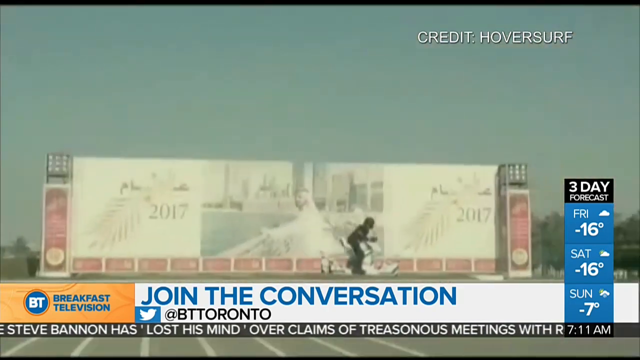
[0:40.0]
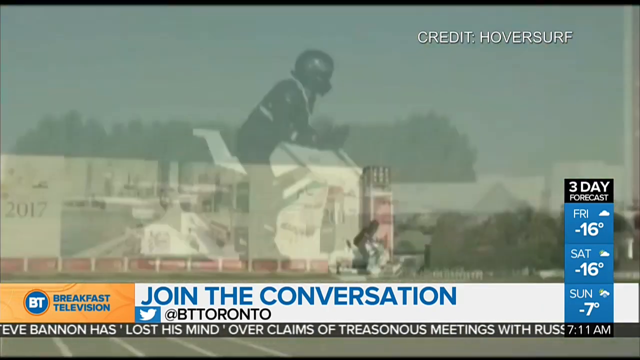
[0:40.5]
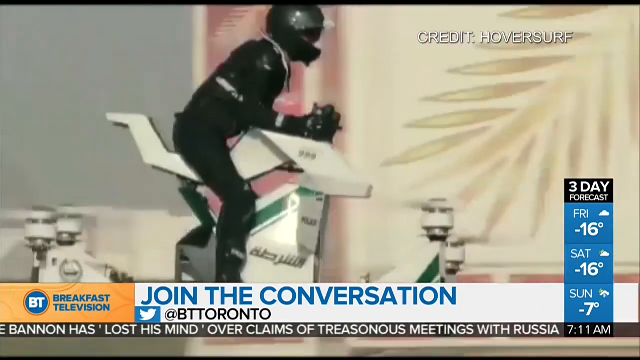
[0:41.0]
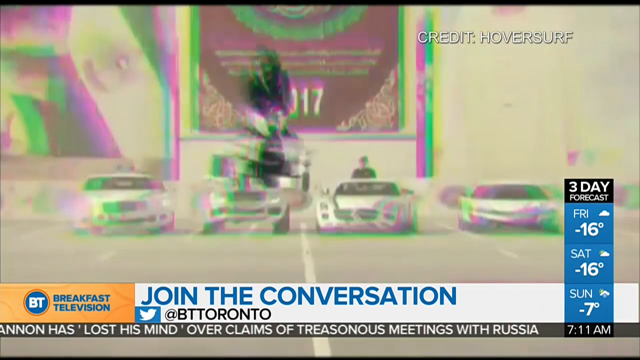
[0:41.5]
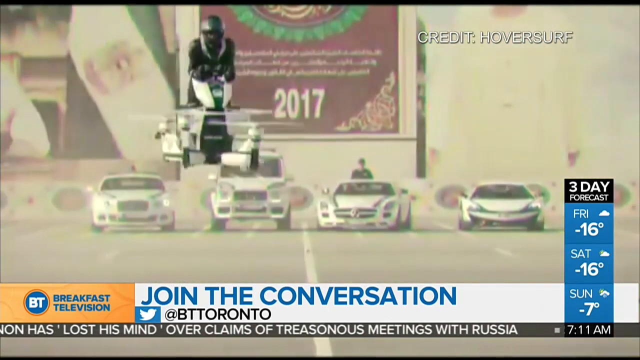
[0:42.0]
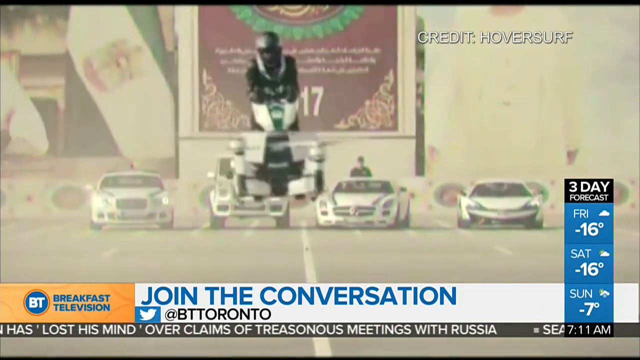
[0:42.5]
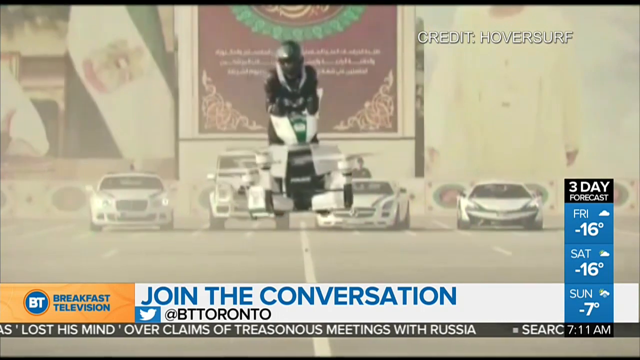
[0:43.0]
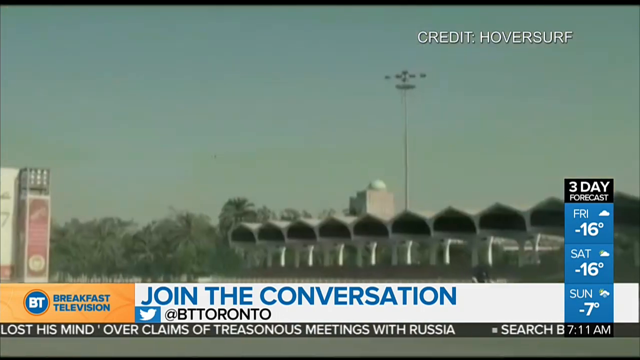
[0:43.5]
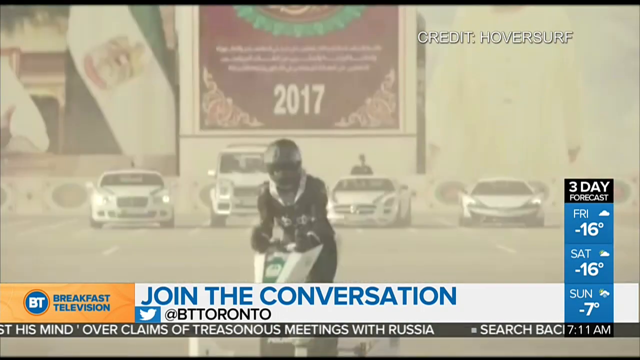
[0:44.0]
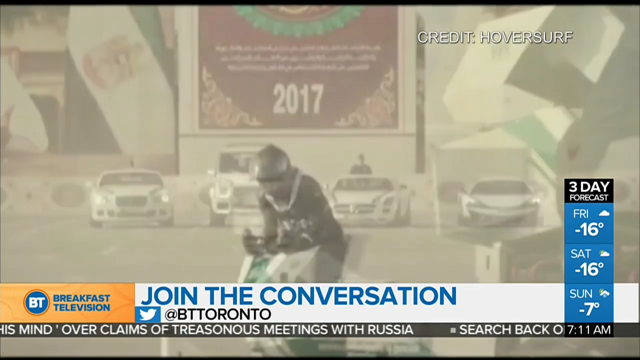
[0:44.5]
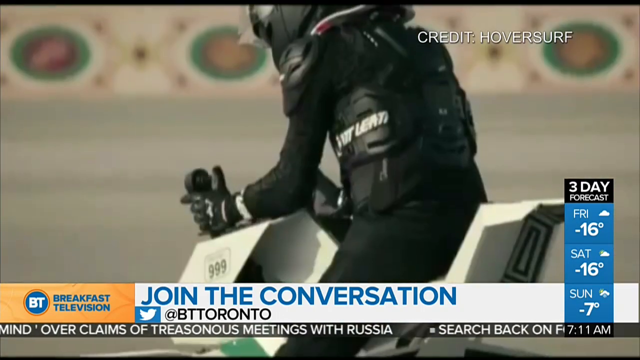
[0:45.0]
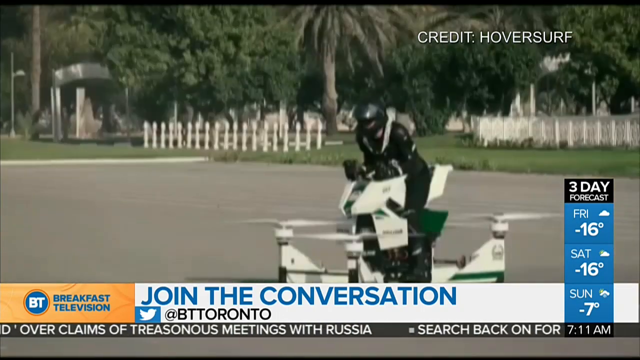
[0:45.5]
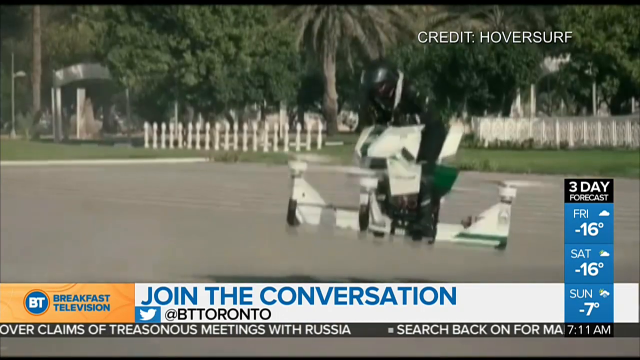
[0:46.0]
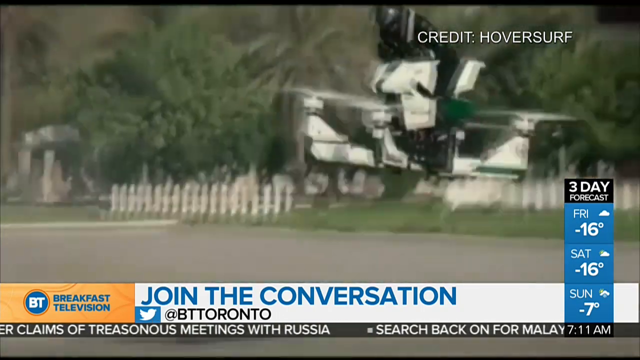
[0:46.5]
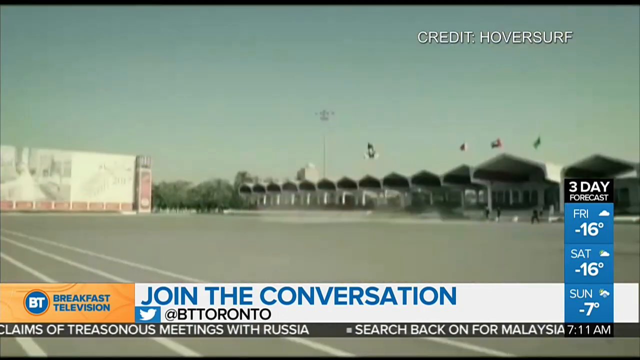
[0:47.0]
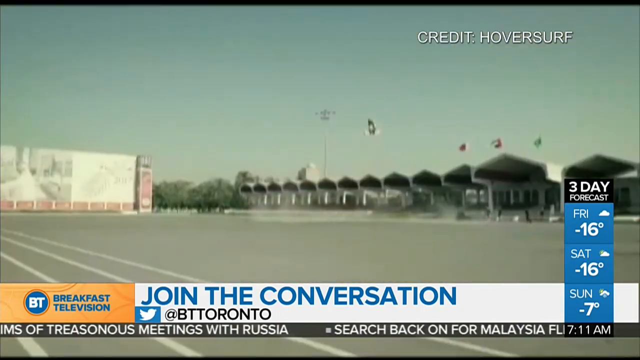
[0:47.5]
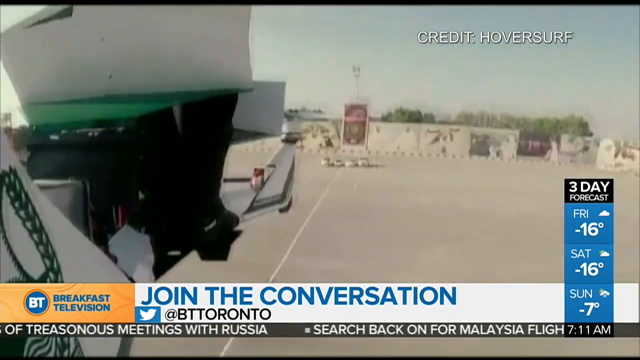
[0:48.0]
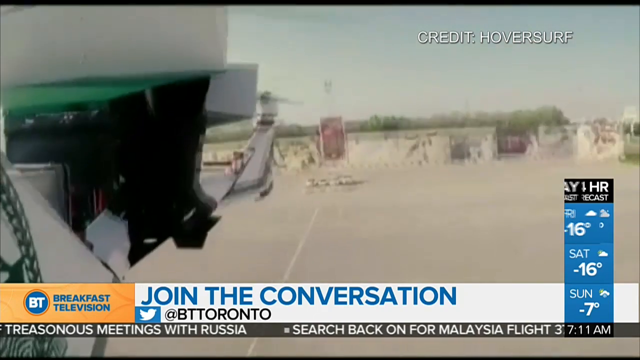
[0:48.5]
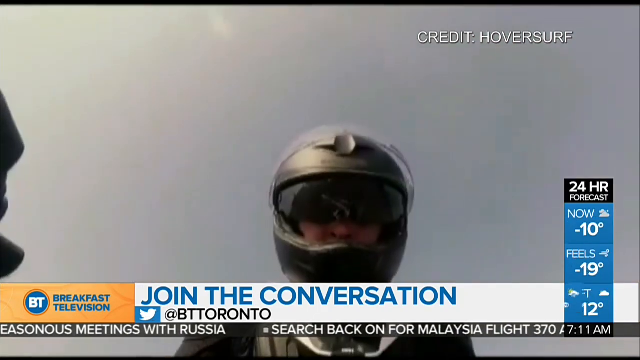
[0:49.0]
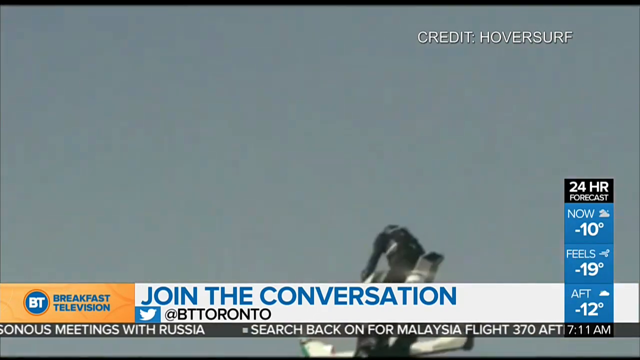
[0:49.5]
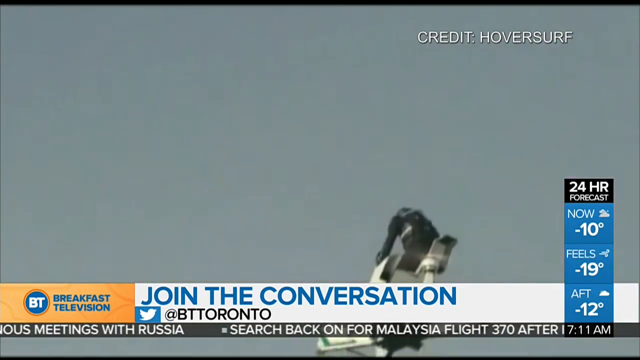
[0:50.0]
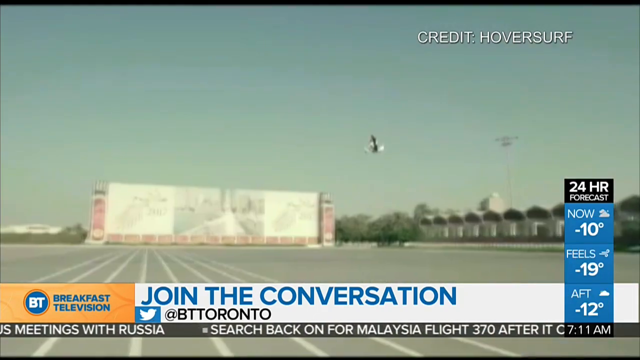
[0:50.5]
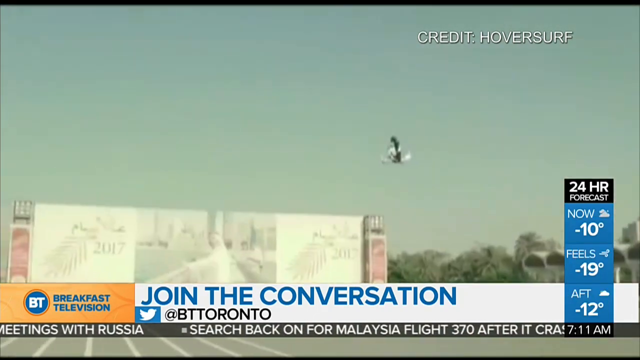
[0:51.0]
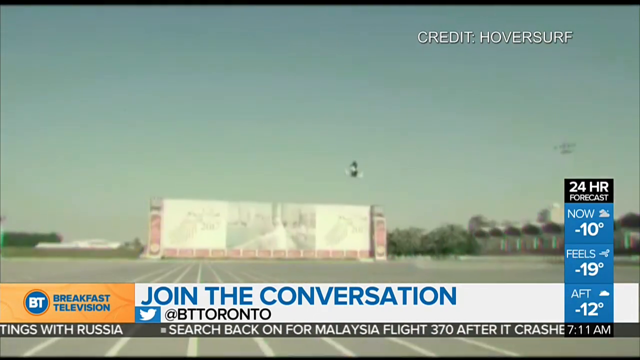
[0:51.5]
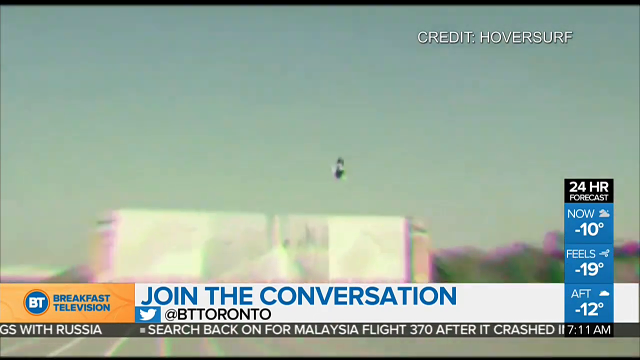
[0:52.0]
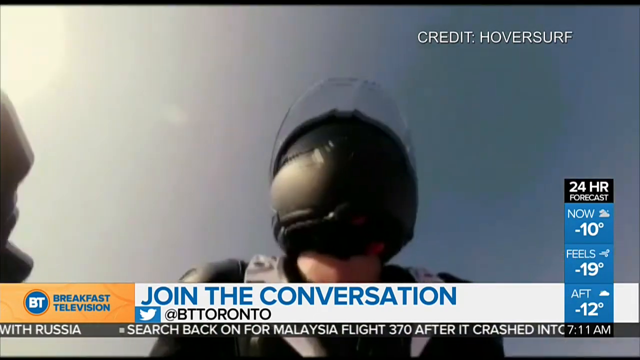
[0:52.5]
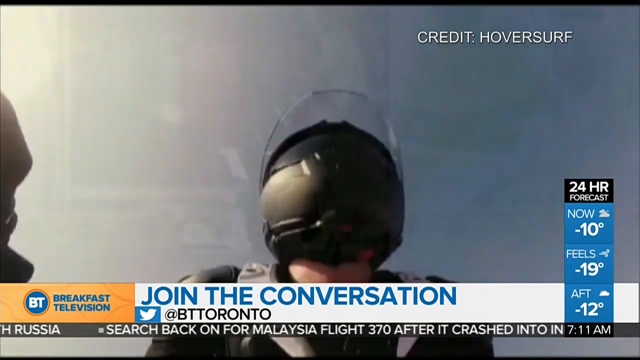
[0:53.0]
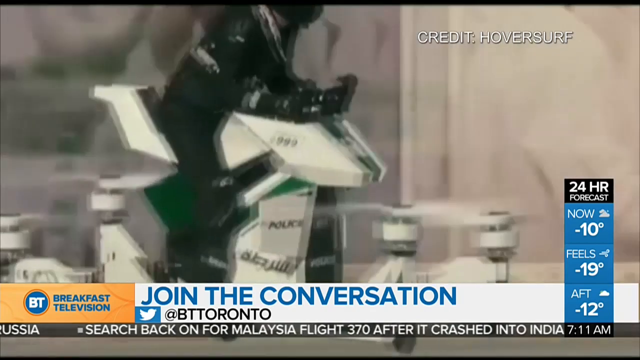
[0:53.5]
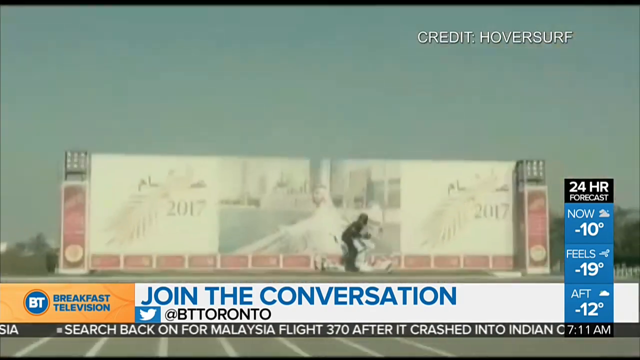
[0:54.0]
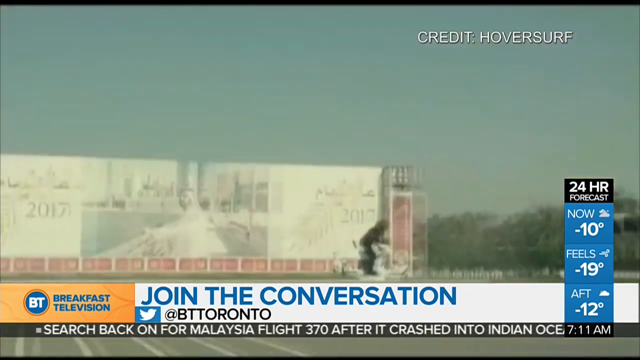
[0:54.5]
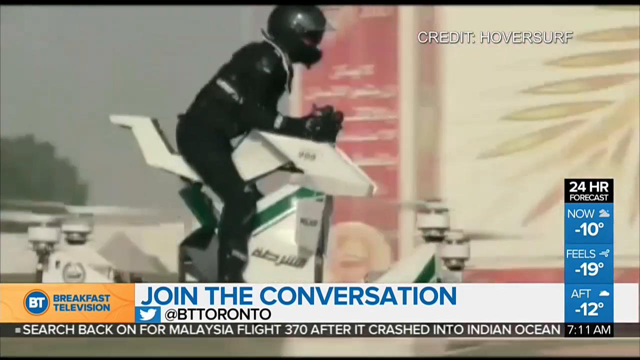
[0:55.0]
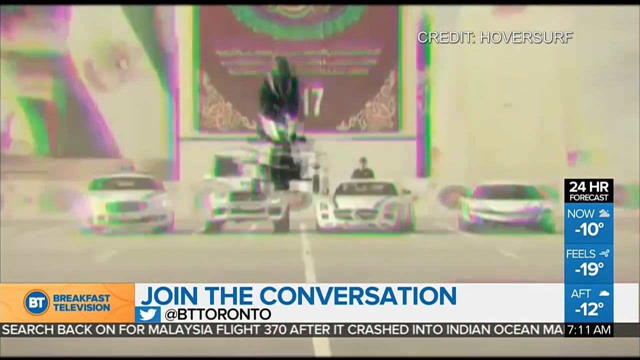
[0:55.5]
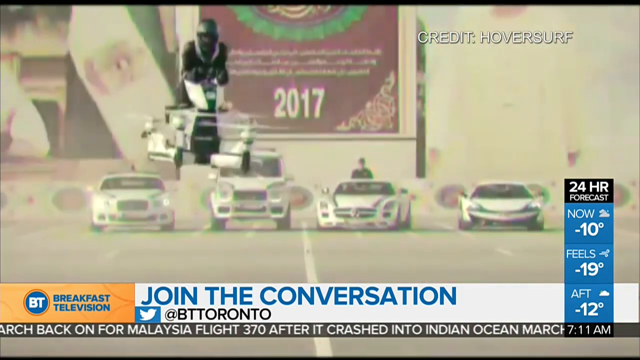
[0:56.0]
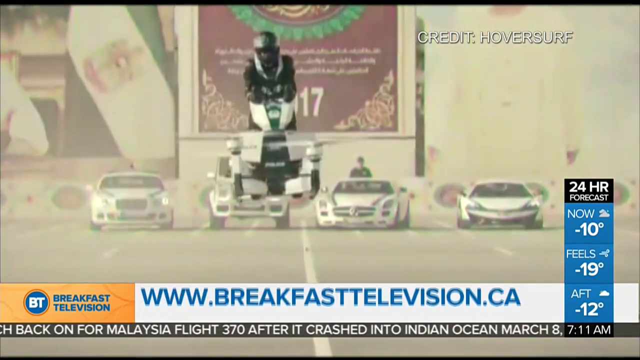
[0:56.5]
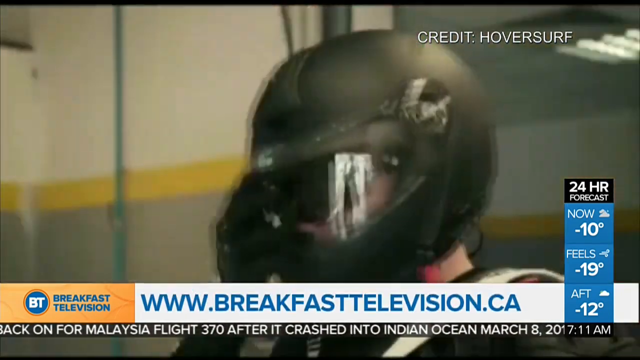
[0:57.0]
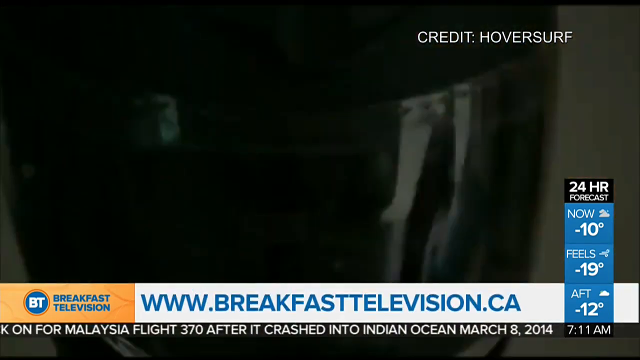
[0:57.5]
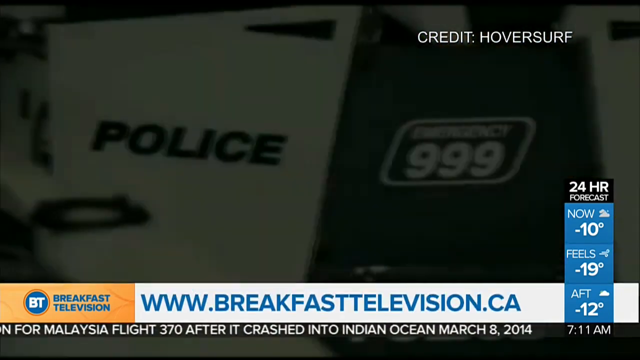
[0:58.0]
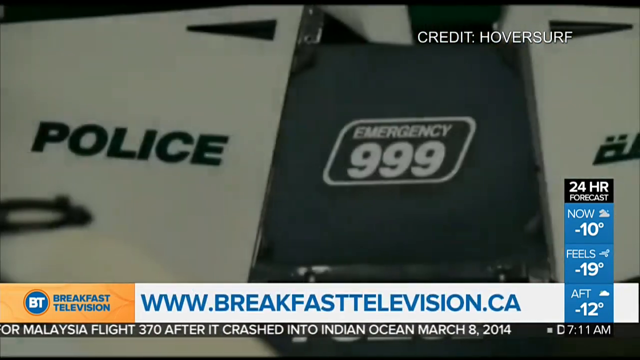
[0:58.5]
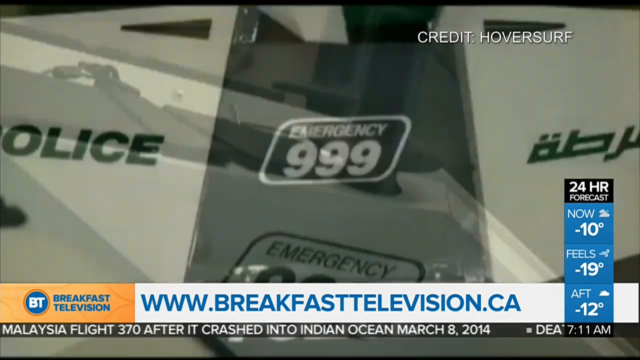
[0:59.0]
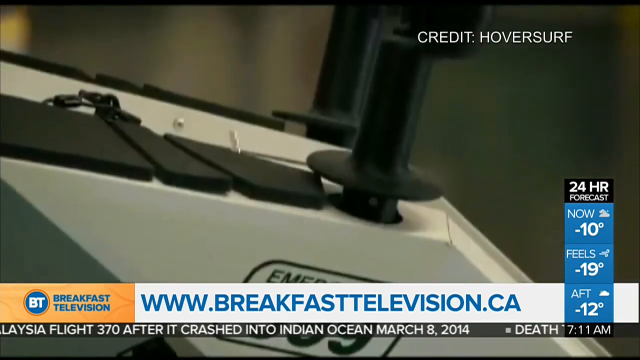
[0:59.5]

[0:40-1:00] The rider continues flying the hoverbike in the air, wearing a black helmet and black protective gear from head to toe. The hoverbike is white with four blades that keep it in the air, and its seating area is black. He flies in an open area that appears to be an airport of sorts, with cars in the background. Text below reads "join the conversation @bttoronto", and a line of text on the right side reads "credit HoverSaf". In the lower right corner there is a three-day forecast: Friday negative 16 degrees, Saturday negative 16 degrees and Sunday negative 7 degrees. The man keeps flying the hoverbike, landing it and taking off. Then a close-up view shows the hoverbike's structure, specifically where the rotors are.